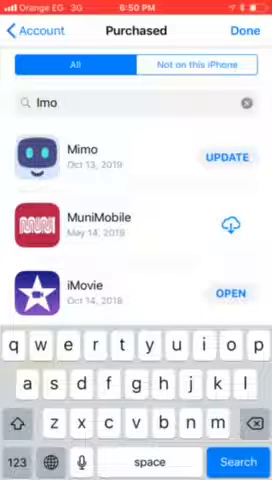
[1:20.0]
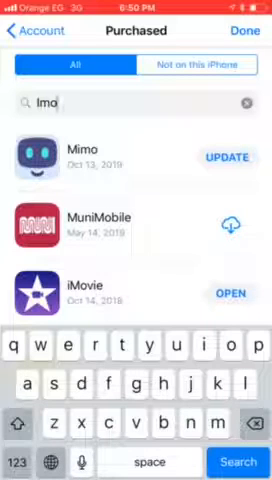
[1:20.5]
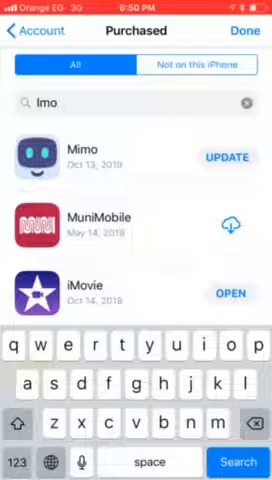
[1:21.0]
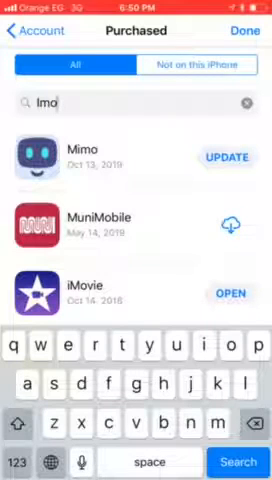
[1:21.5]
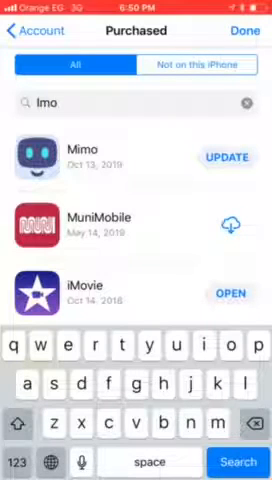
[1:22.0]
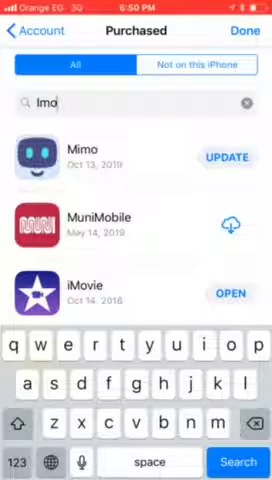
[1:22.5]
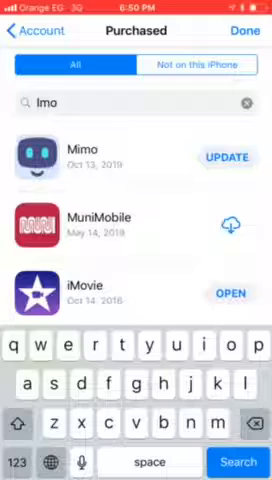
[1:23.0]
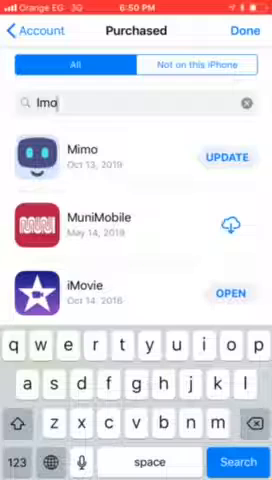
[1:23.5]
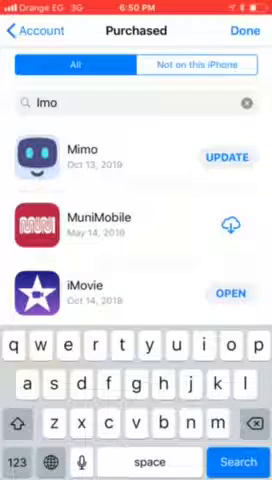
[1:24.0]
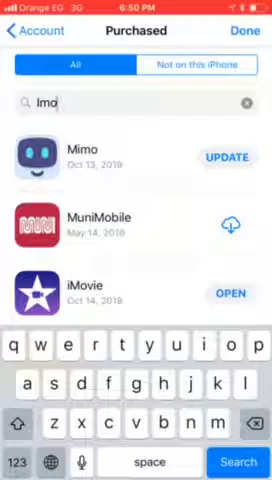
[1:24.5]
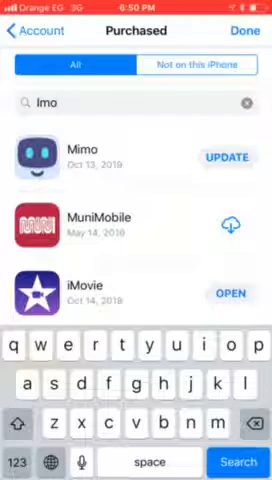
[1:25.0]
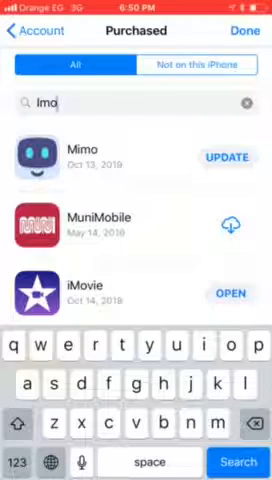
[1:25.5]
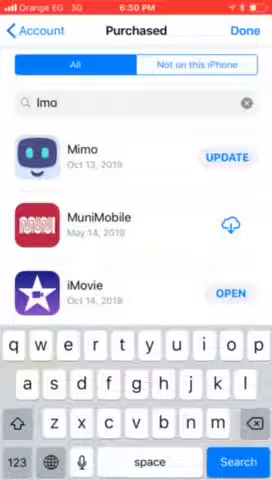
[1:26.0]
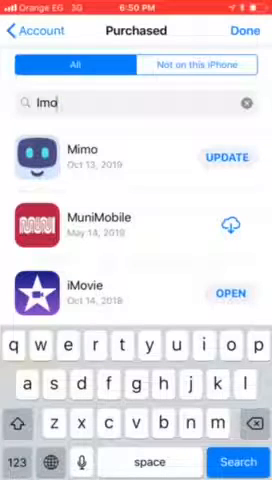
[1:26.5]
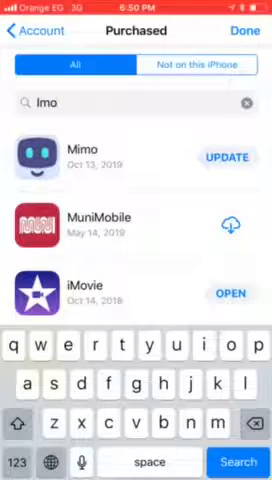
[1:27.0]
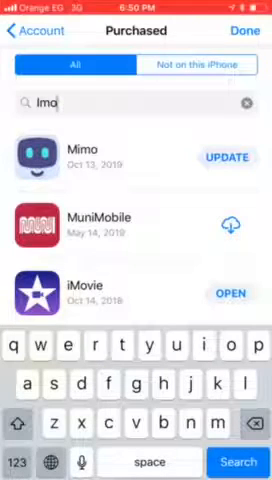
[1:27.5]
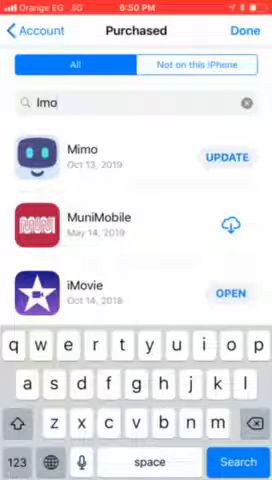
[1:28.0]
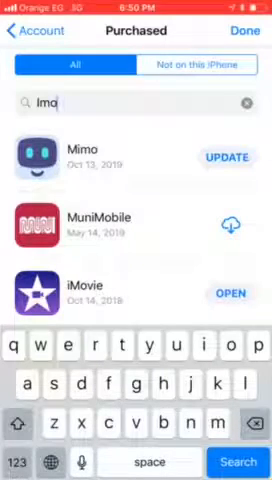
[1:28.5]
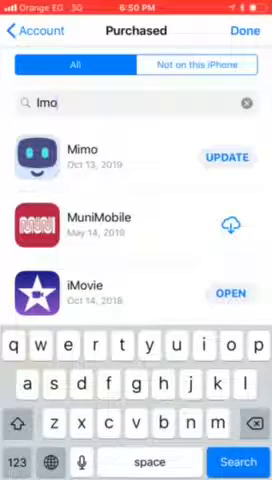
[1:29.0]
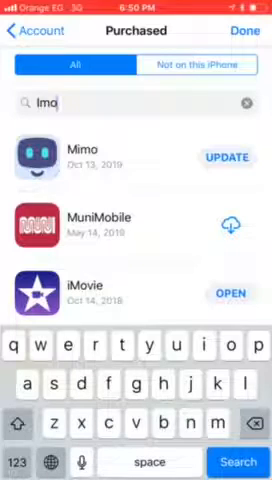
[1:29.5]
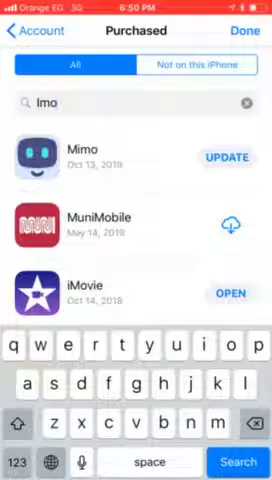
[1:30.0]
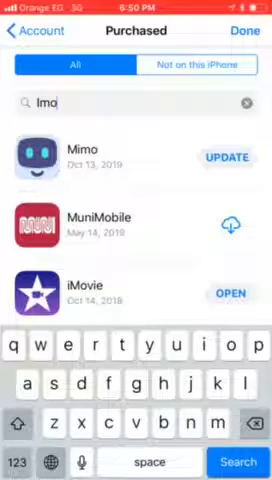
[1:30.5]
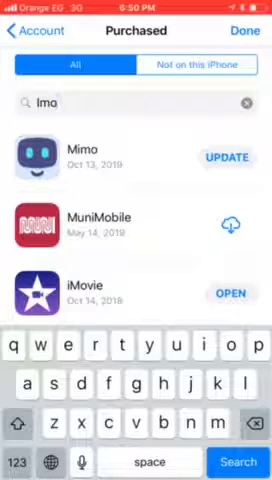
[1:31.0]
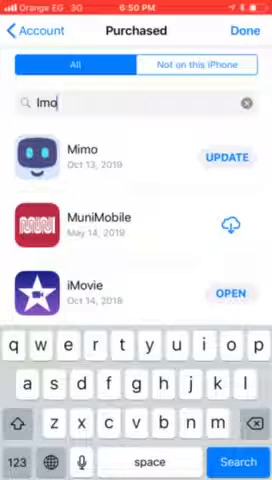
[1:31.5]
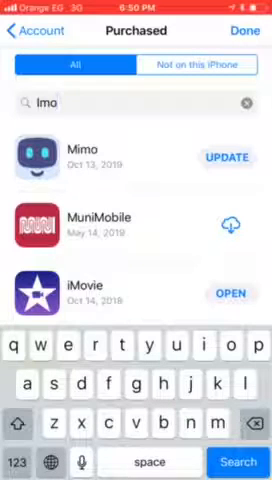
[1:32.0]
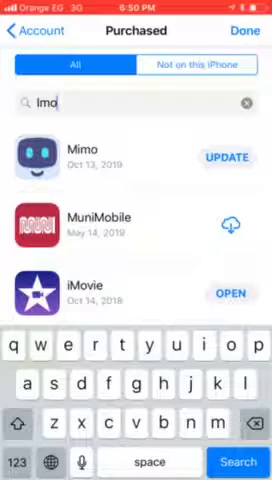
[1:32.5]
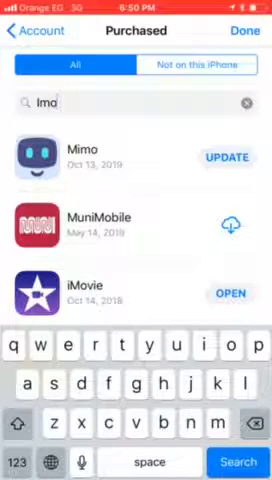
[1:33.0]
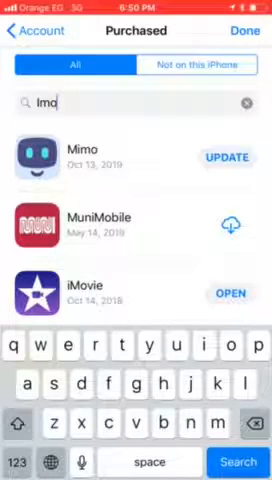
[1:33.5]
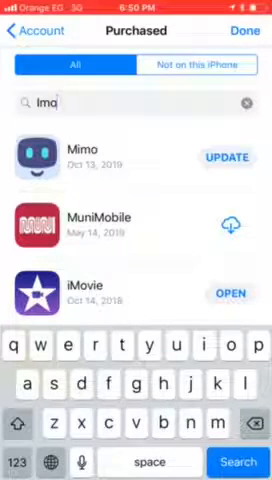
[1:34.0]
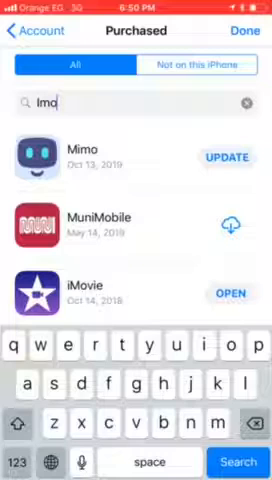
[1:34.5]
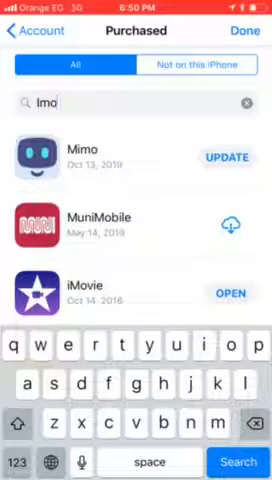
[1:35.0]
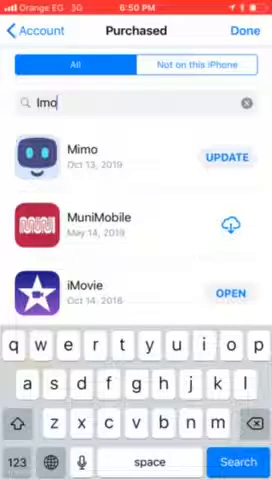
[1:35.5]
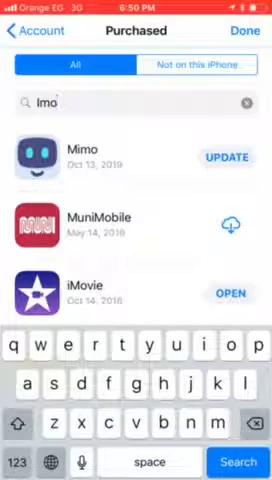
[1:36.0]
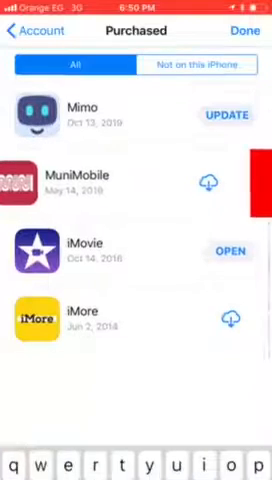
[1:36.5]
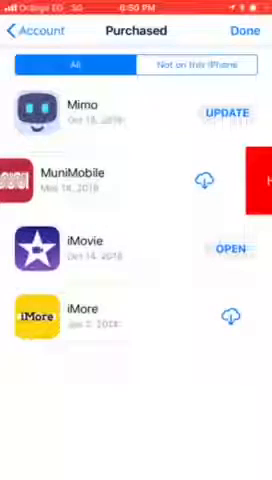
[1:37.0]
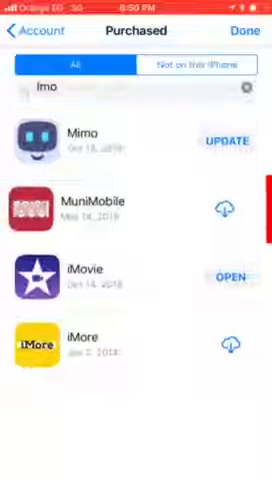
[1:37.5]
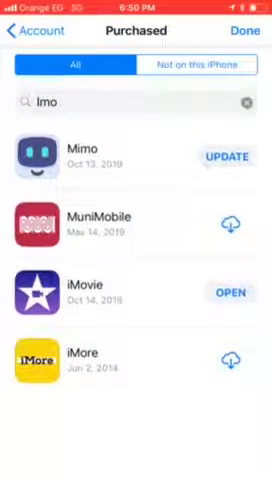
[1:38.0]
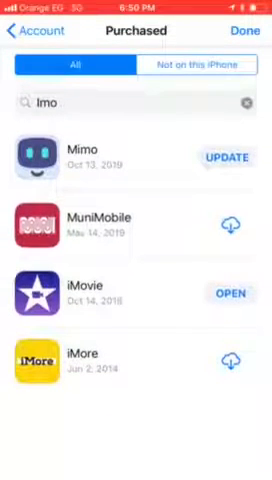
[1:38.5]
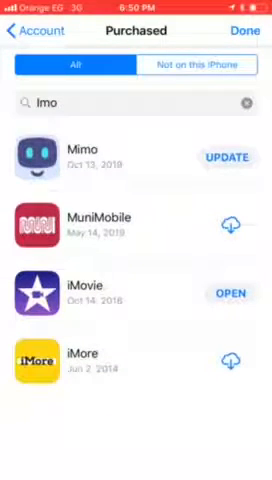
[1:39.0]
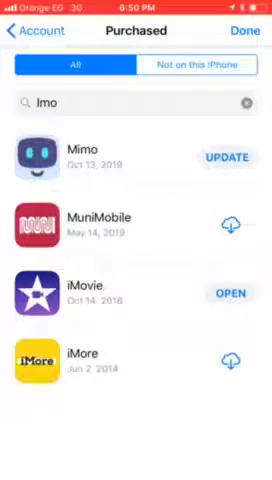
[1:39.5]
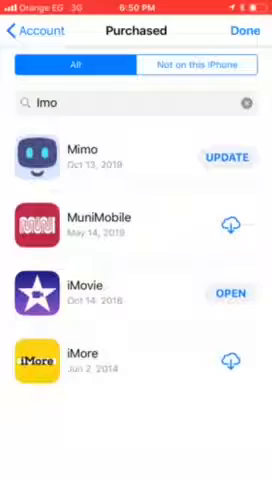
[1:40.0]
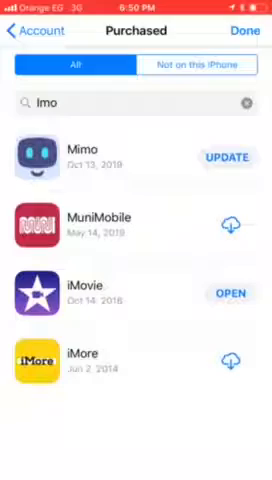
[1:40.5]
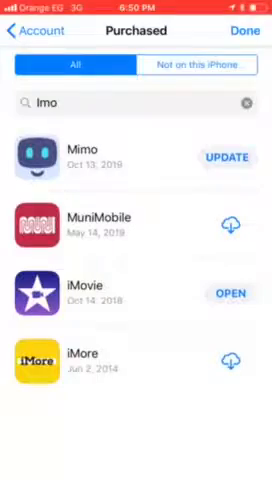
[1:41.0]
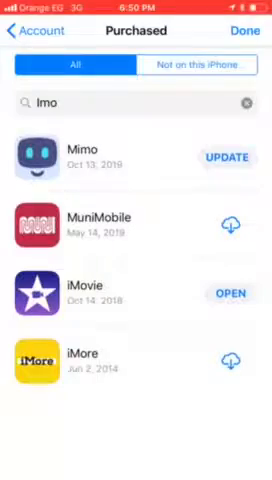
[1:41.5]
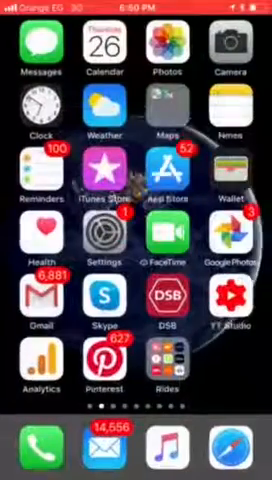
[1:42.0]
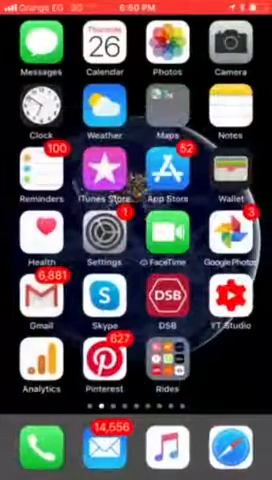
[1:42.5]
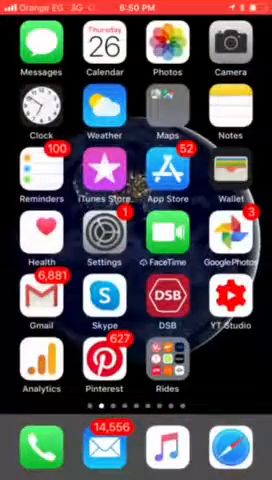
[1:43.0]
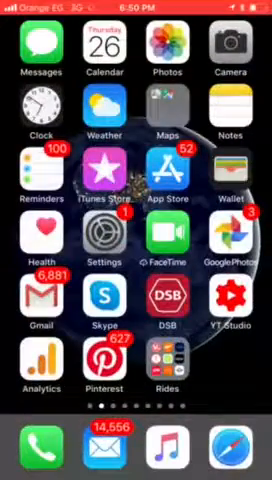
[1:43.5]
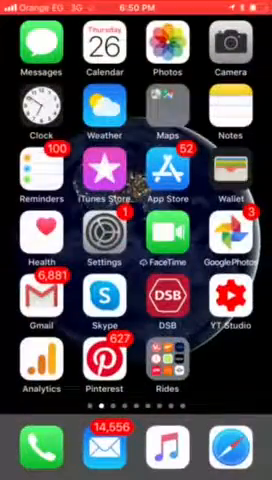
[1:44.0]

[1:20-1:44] Something related to iMovie is shown, with iMovie apparently listed on the screen, and the person seems to still be looking for iMovie.